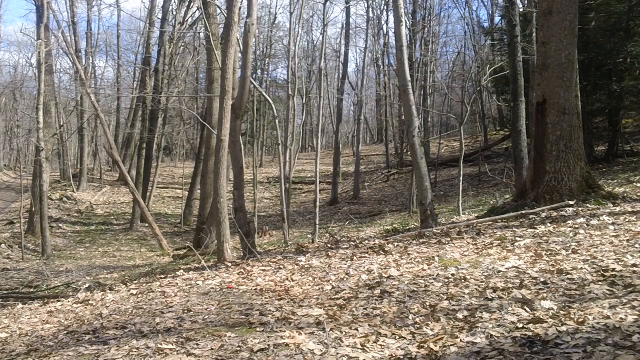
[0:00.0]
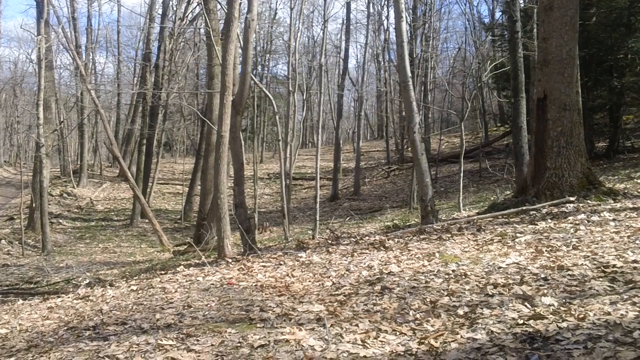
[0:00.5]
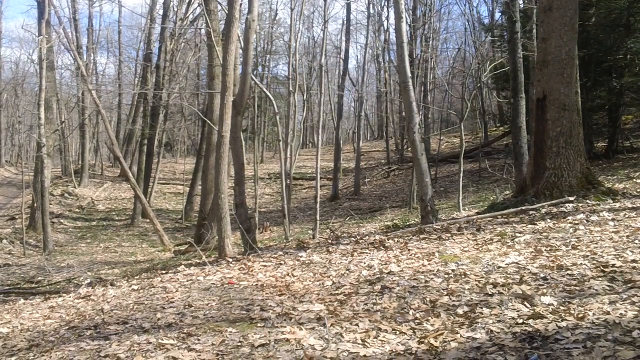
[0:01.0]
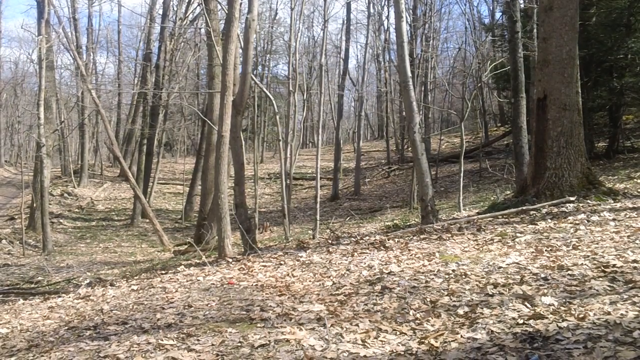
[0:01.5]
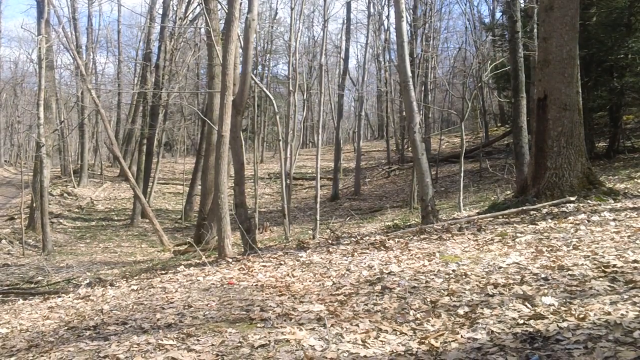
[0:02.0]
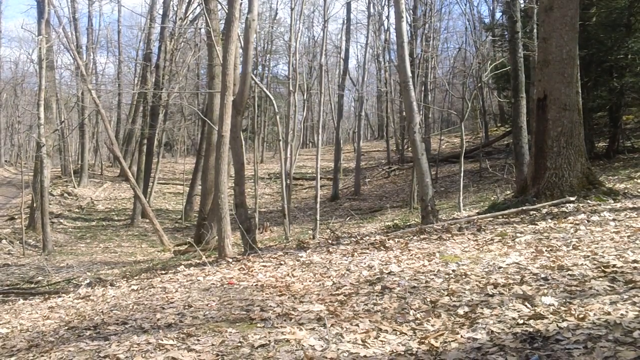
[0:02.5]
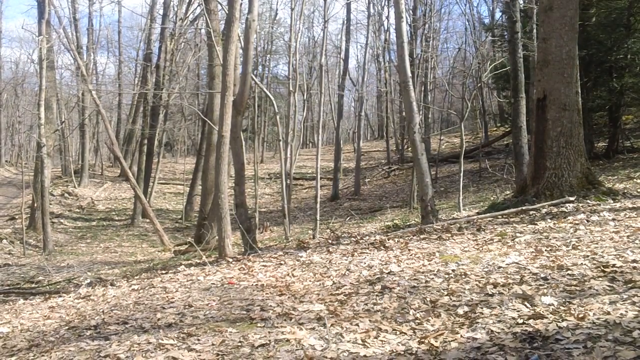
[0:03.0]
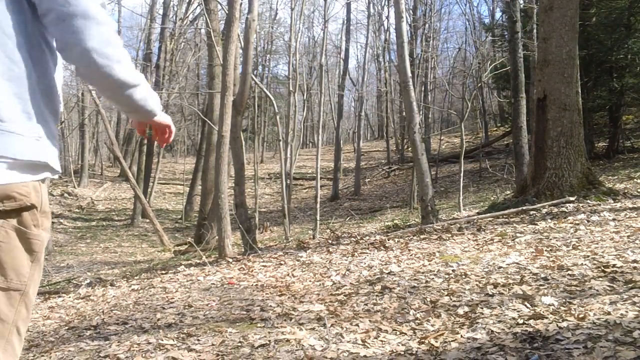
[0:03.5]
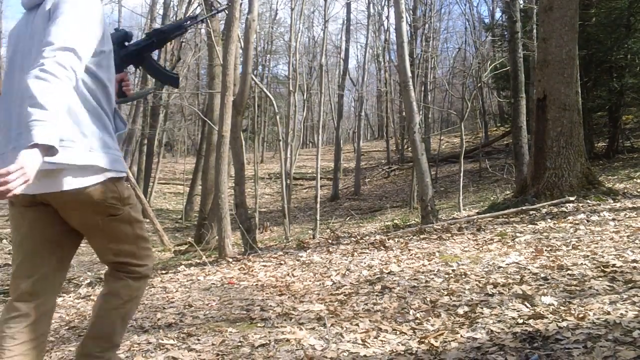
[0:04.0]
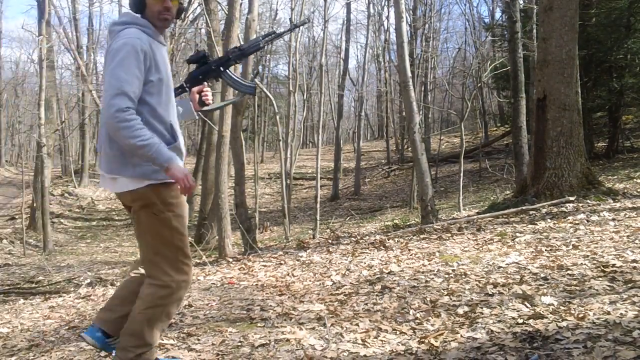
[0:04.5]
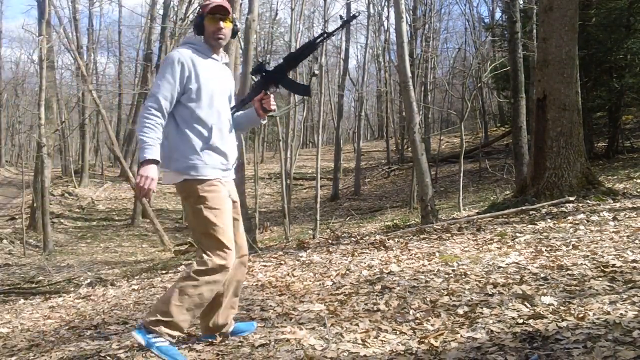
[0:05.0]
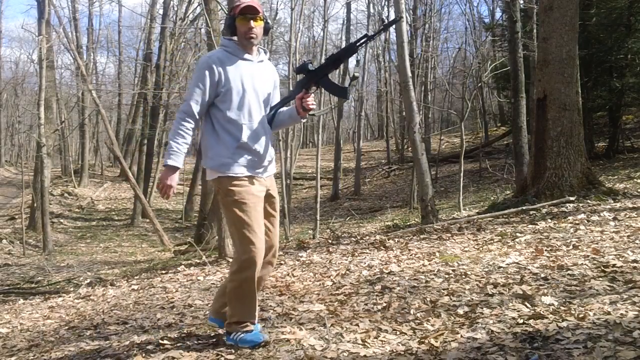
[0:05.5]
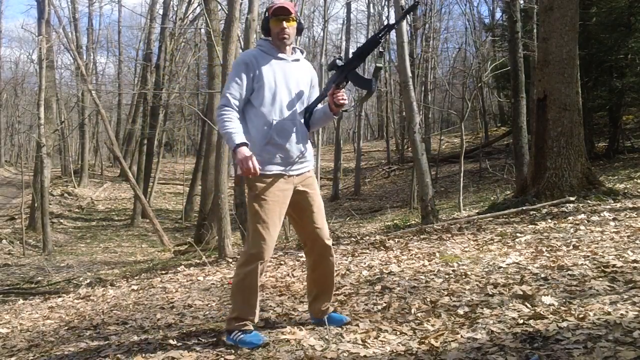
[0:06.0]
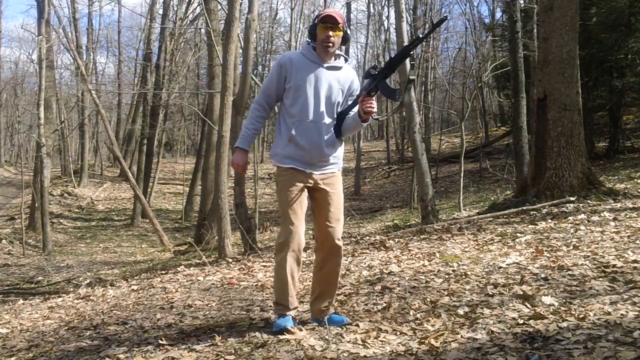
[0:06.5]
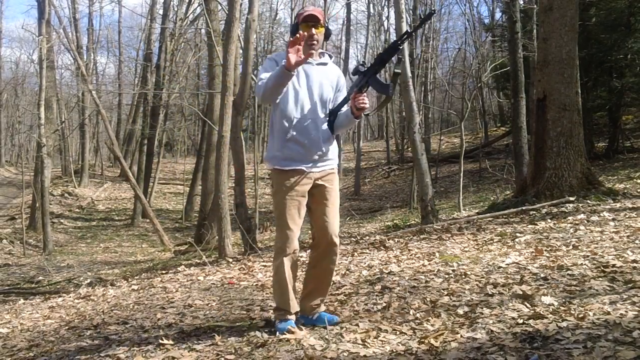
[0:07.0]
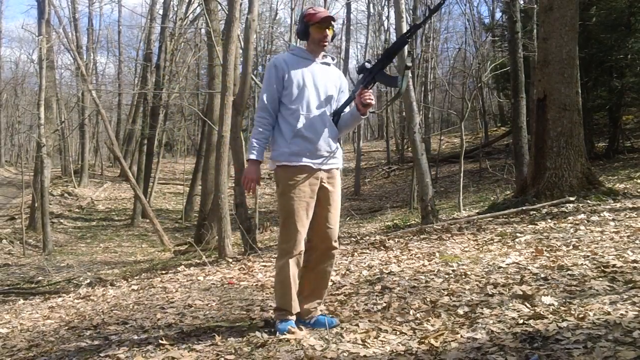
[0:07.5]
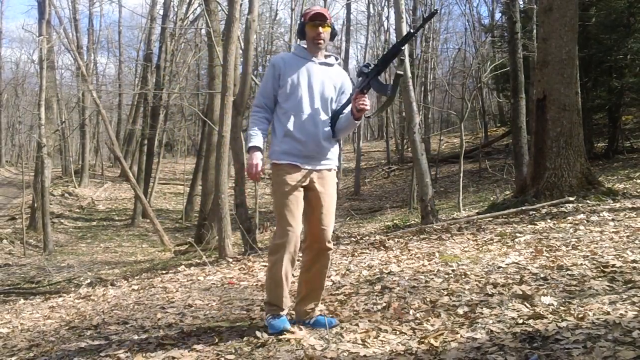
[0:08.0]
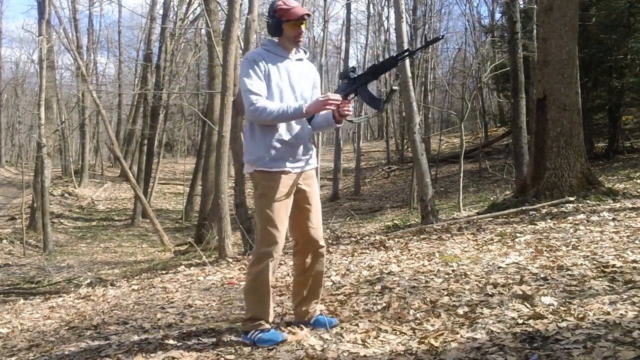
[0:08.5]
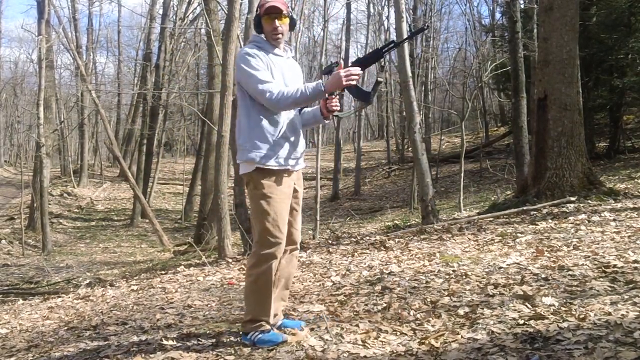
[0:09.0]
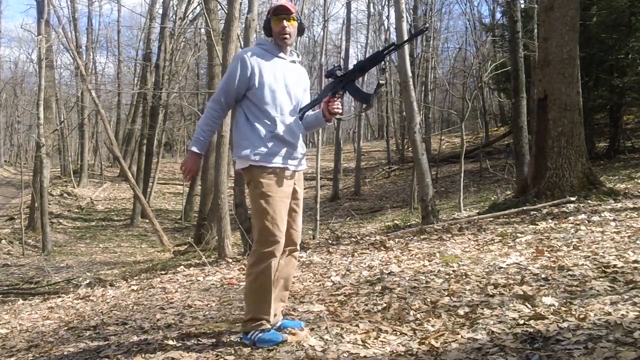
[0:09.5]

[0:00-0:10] A man stands in the middle of the woods wearing brown pants, a grey jersey, a red cap, some earplugs and blue sneakers. Woods surround him on all sides, and the grass on the ground is clearly drying up. He shows a very long gun. Nobody other than him is visible.